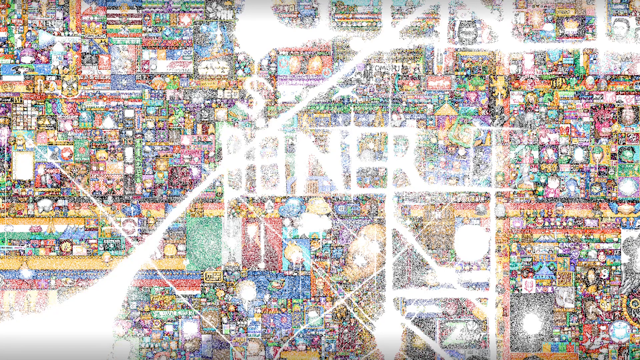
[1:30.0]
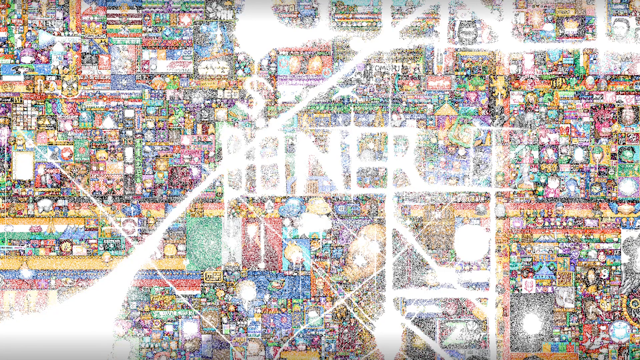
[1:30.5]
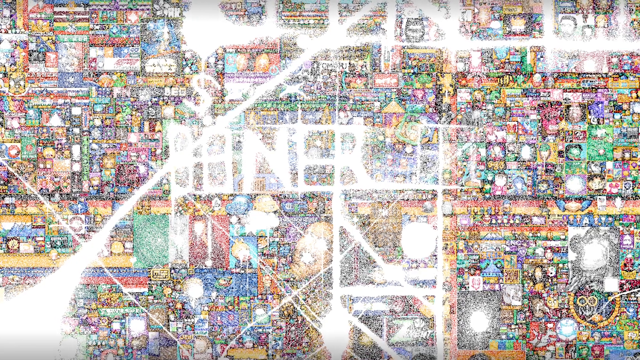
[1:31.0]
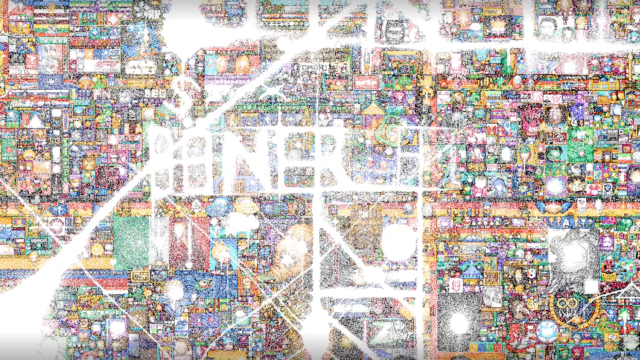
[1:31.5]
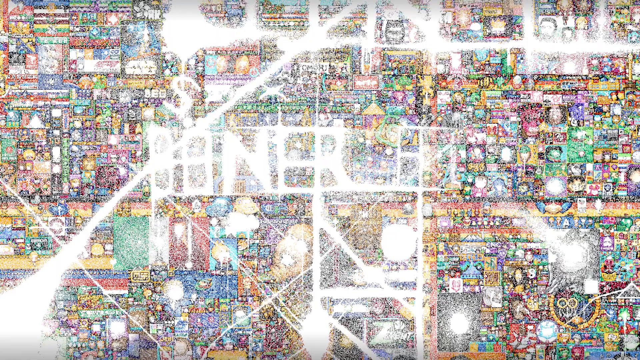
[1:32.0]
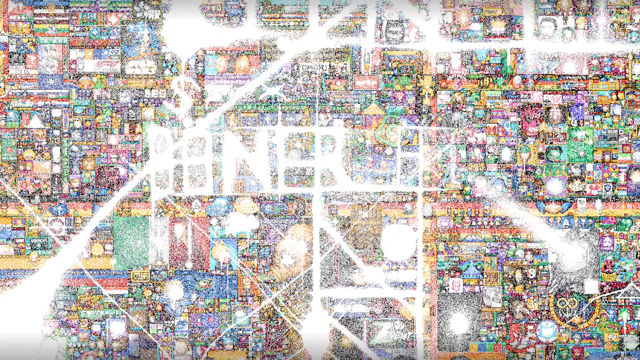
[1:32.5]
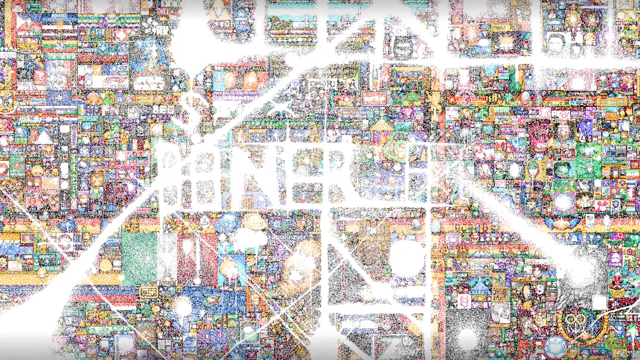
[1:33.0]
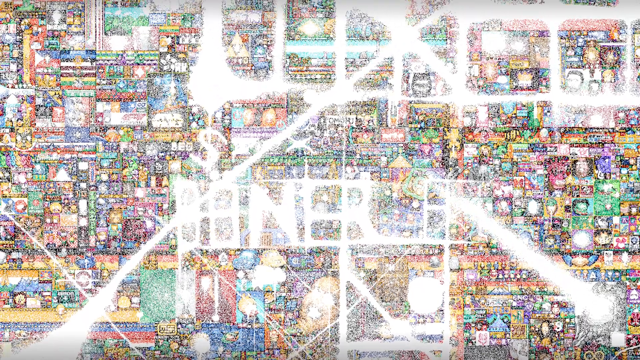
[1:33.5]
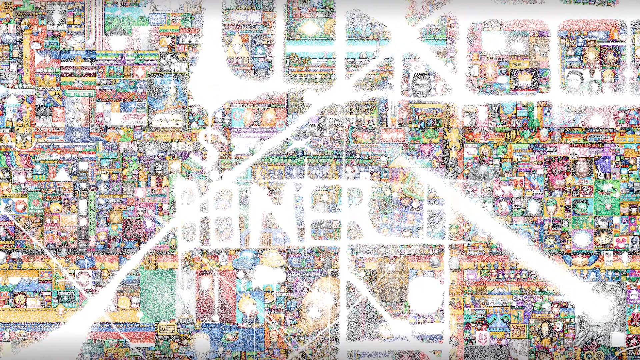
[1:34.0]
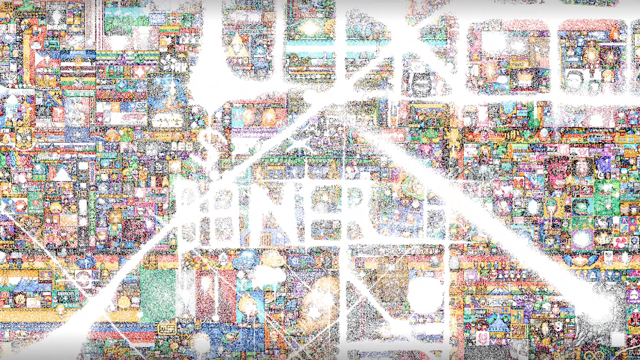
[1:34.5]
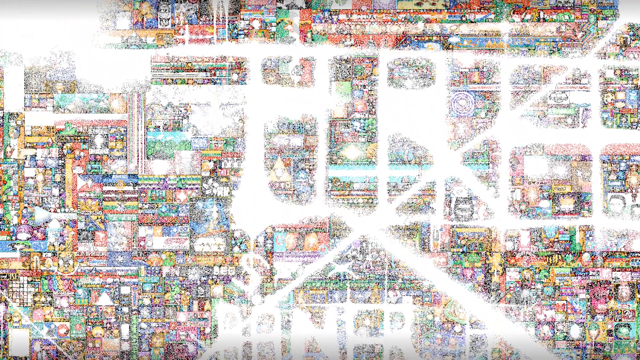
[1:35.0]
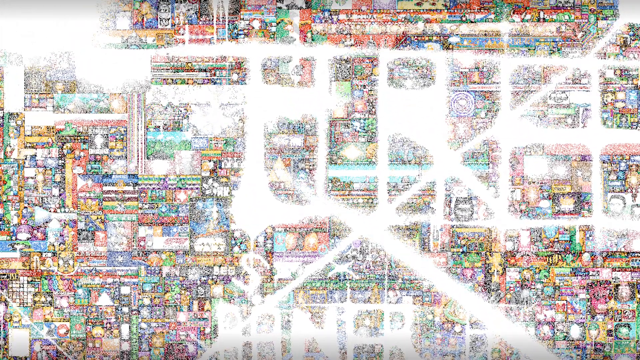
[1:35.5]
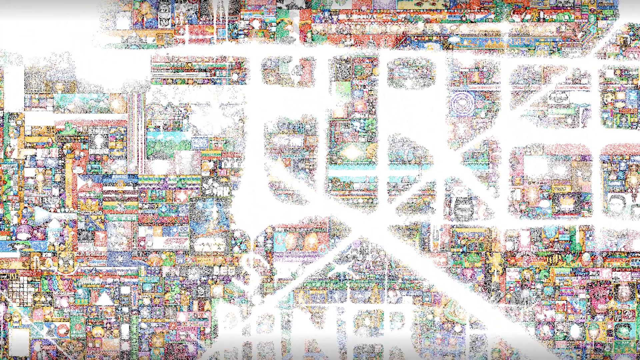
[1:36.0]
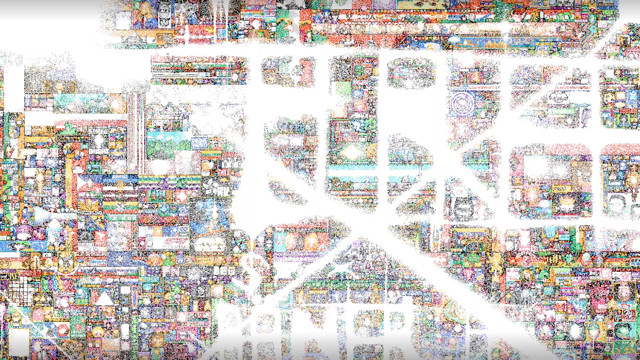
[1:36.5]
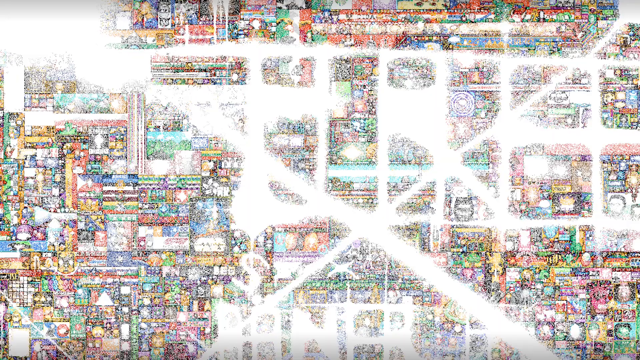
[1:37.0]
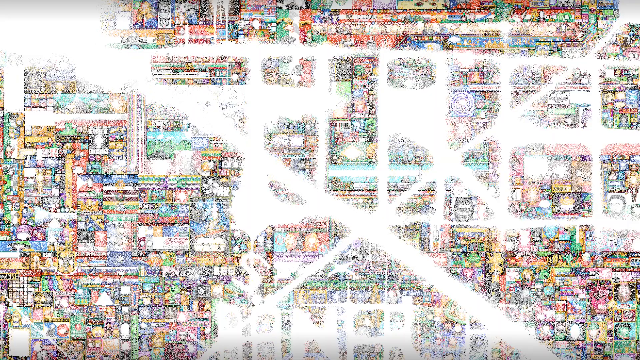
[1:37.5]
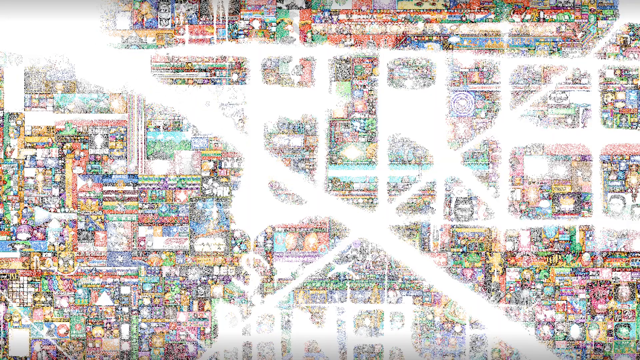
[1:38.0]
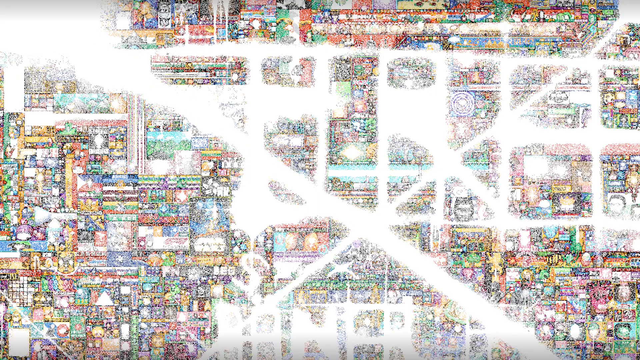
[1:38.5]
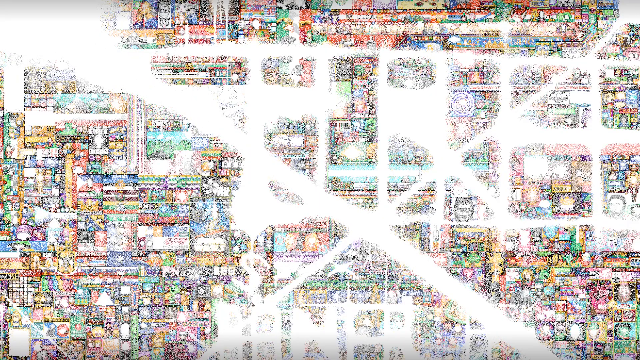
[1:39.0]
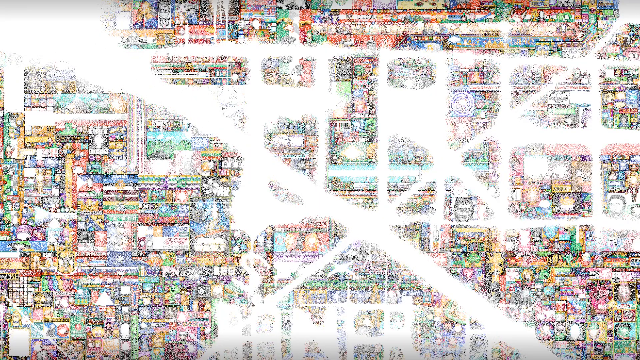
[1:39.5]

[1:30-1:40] Many pixels of the art are disintegrating, and everything is being destroyed. Lots of pixels represent different subreddits. Different anime characters appear, along with the German flag and many things representing Germany. A red, yellow and green flag is possibly the Bolivia flag. Many of the pixels form the letters "B A N E R" and a dollar sign, looking like a map of something.